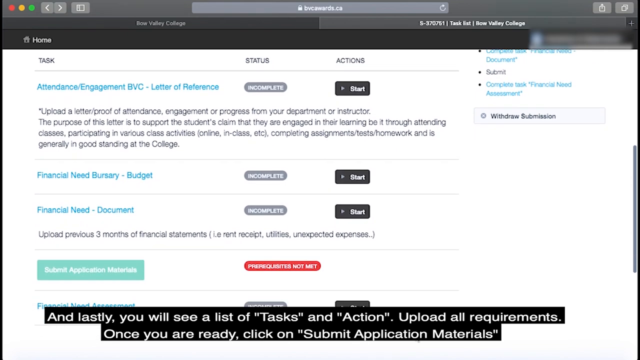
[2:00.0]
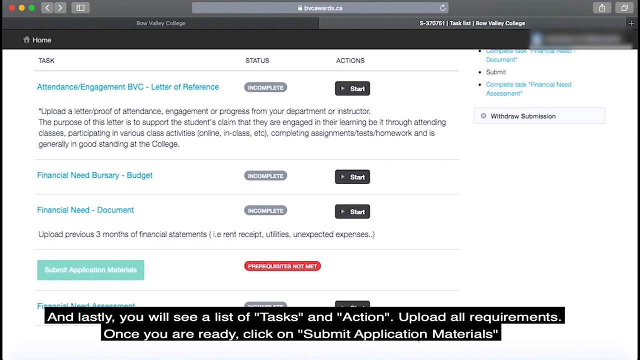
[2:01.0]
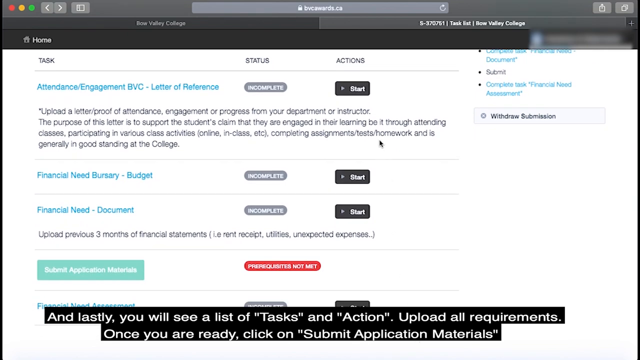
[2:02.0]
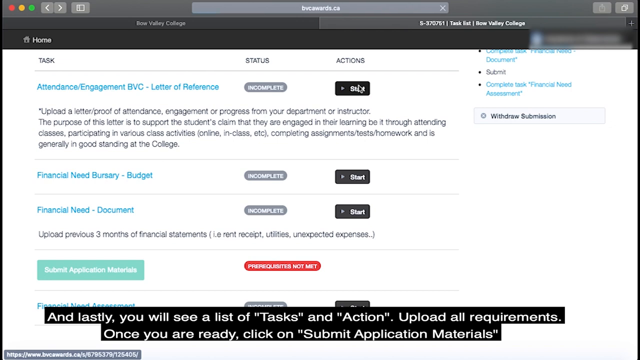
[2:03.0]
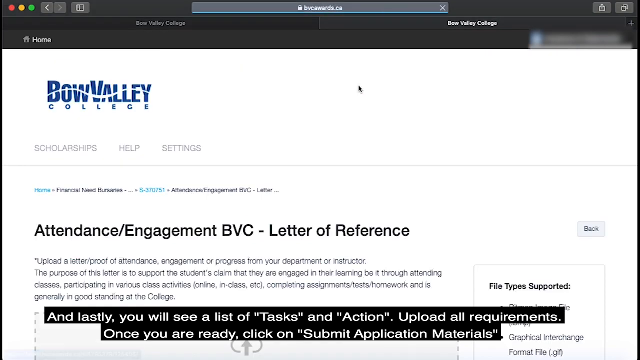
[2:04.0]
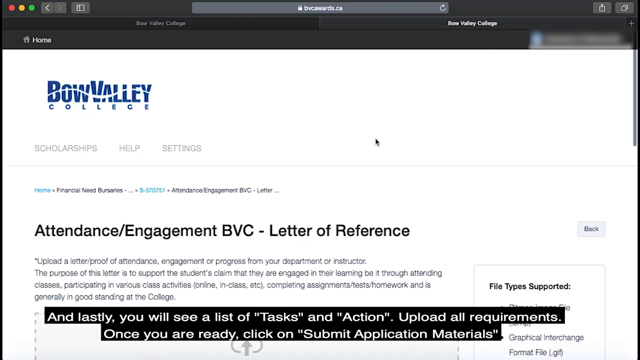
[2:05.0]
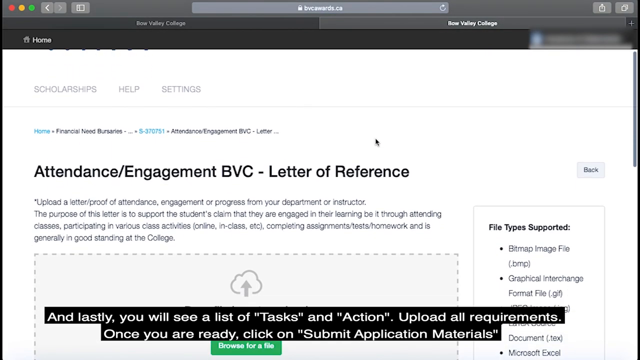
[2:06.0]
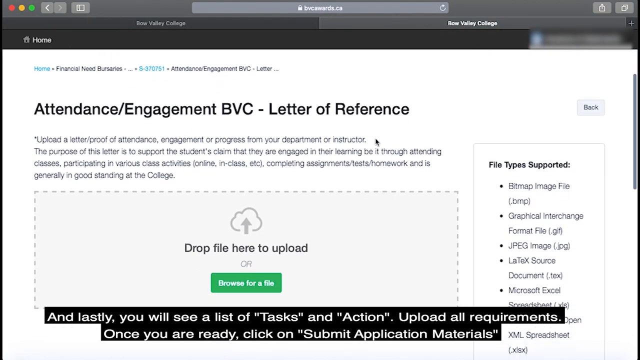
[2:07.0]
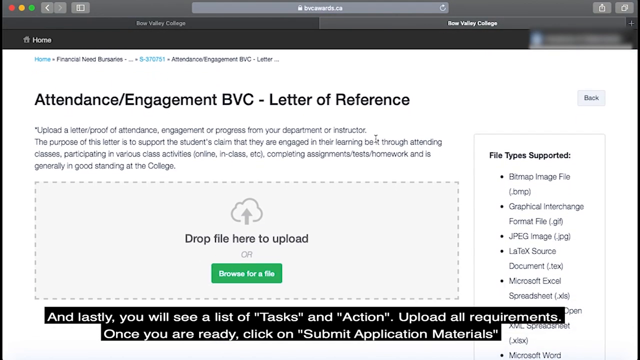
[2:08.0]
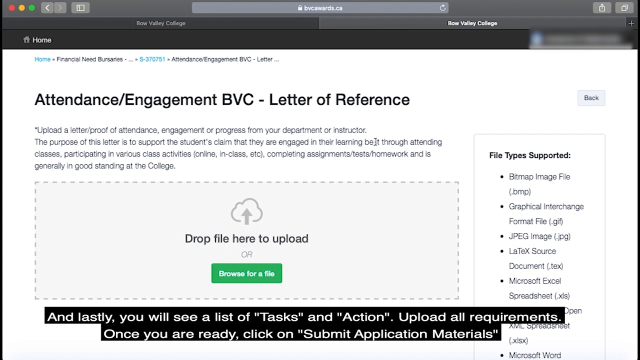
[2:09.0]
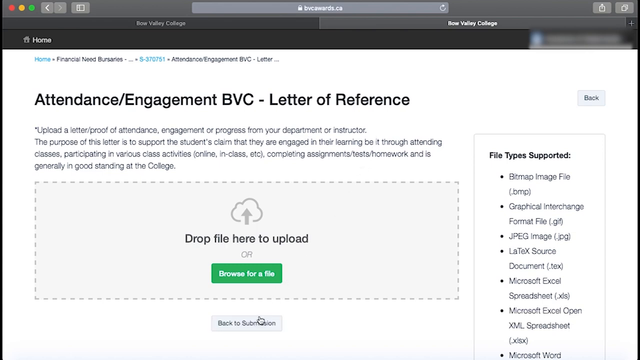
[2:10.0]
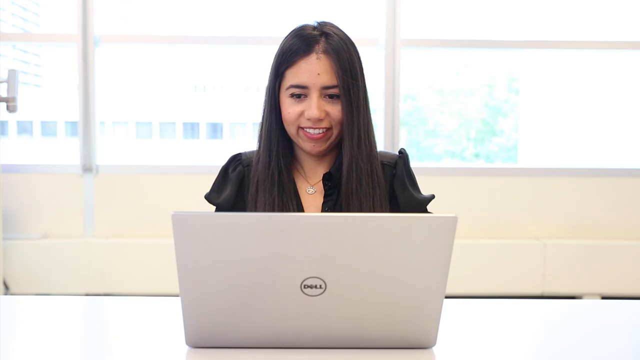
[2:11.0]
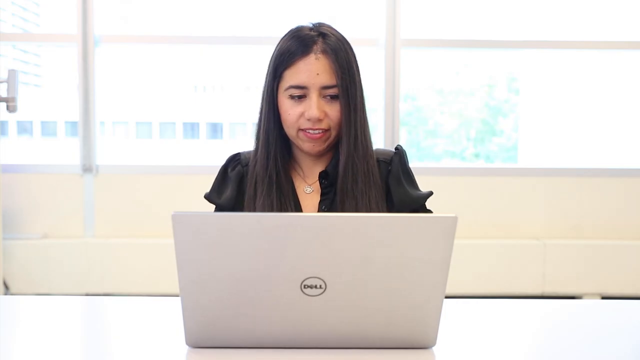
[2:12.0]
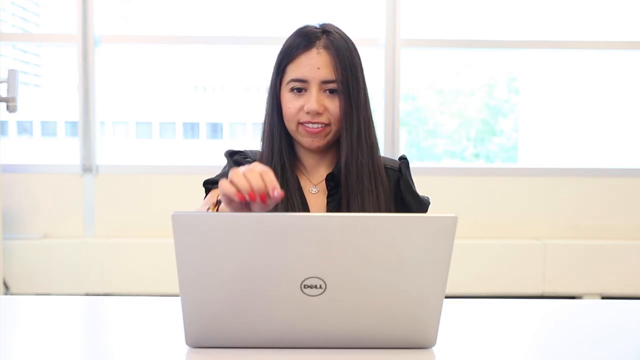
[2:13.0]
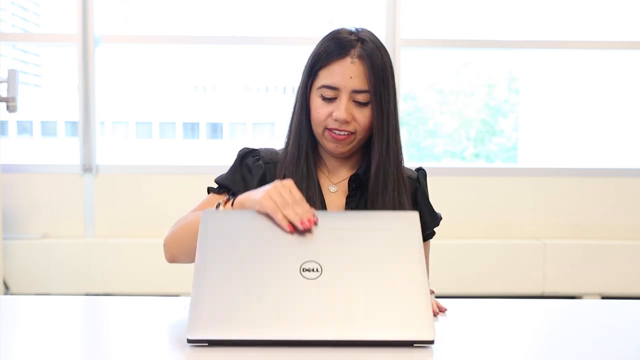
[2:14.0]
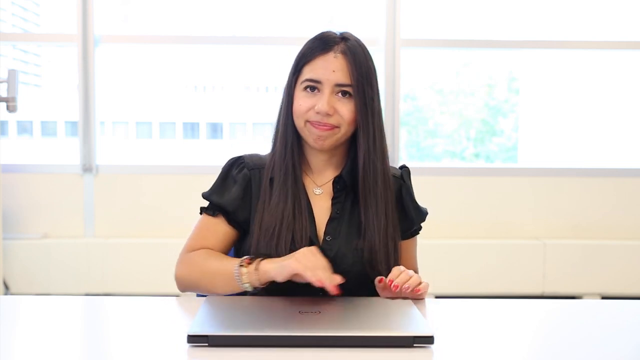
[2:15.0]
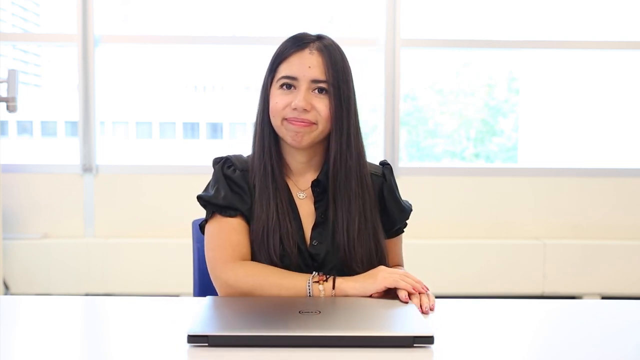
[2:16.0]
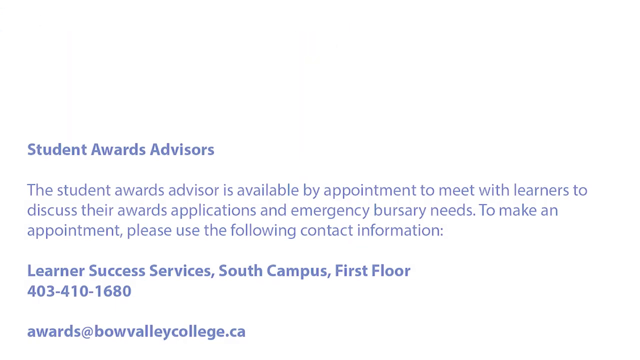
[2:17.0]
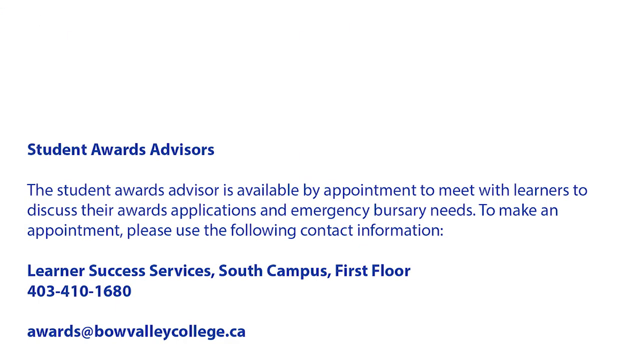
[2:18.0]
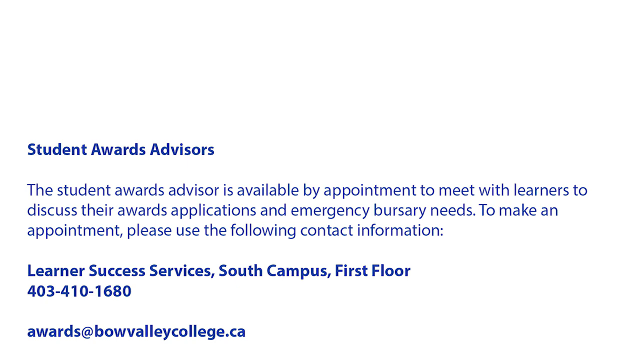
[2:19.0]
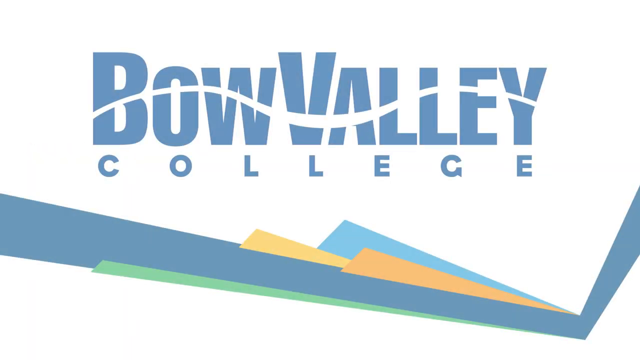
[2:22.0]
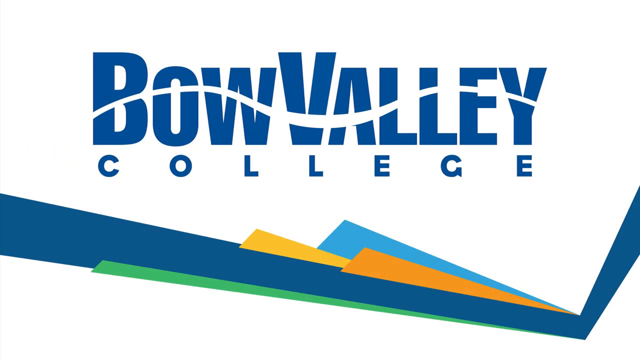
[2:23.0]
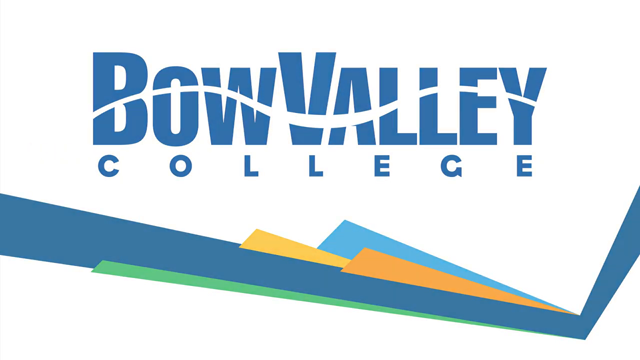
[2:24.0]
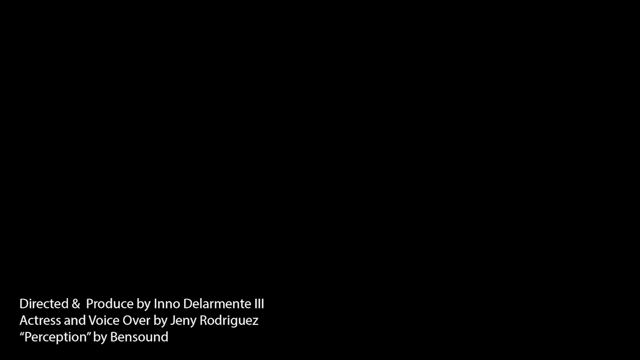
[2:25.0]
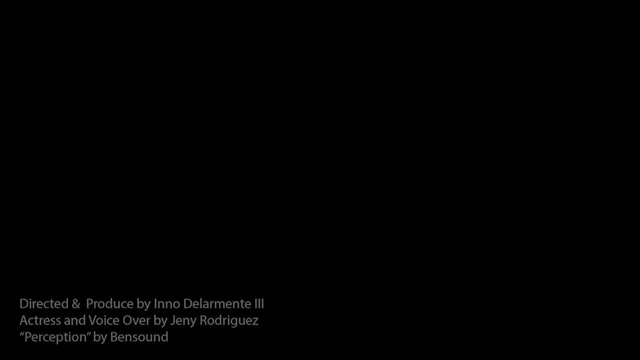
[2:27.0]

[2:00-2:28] The mouse moves and hovers around the screen, then goes close to a rectangle at the very top centre of the screen that says "start", with a white triangle to the right of the word. The mouse clicks the start button and the screen changes again, showing black text on the left-hand side that reads "Attendance Engagement BVC Letter of Reference". The mouse goes over to the right-hand side bar, clicks and scrolls all the way down to the bottom. The screen then changes to show the lady facing the camera and smiling. She is wearing a necklace with a pendant on it. The back of the laptop has a circle with "Dell" inside it. Still smiling, she reaches up to the laptop with her right hand; her thumb and four fingers are visible, with red nail varnish on her four fingers. She reaches to the lid and pulls it towards her, shutting the laptop, and her left hand is then seen touching the desk.